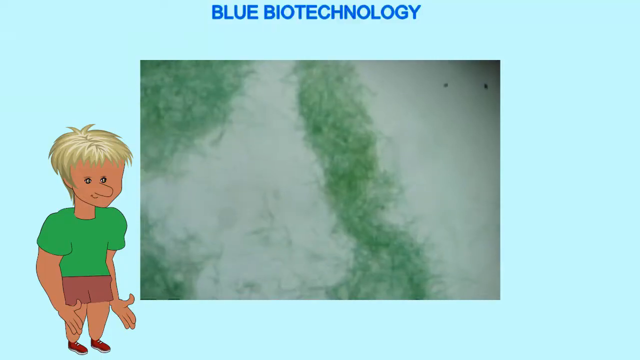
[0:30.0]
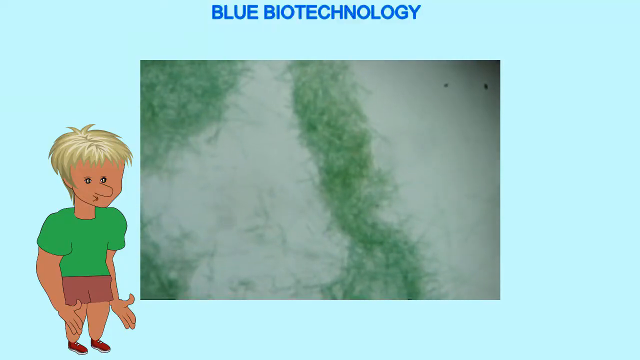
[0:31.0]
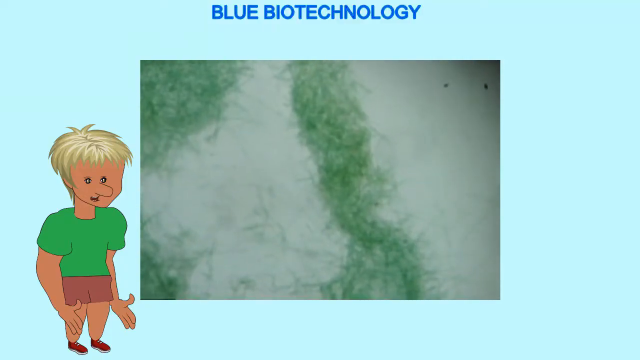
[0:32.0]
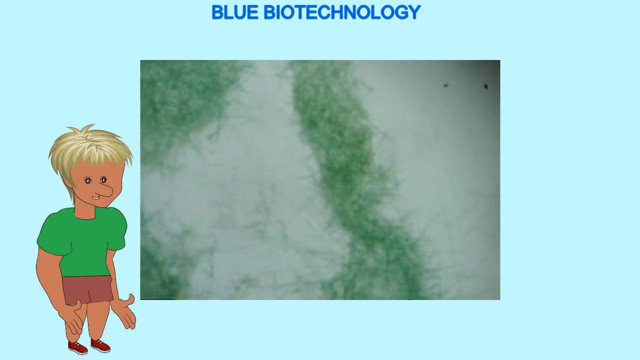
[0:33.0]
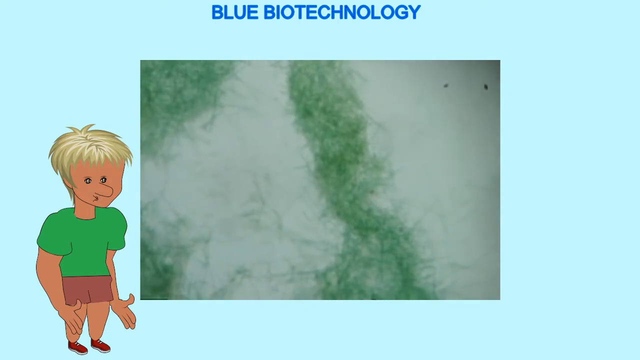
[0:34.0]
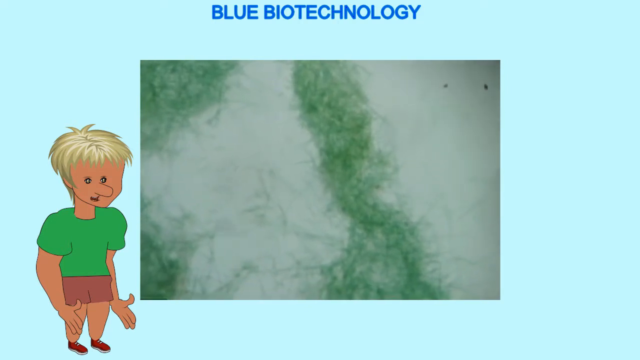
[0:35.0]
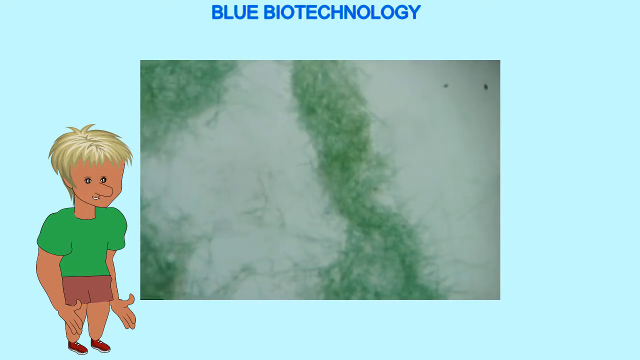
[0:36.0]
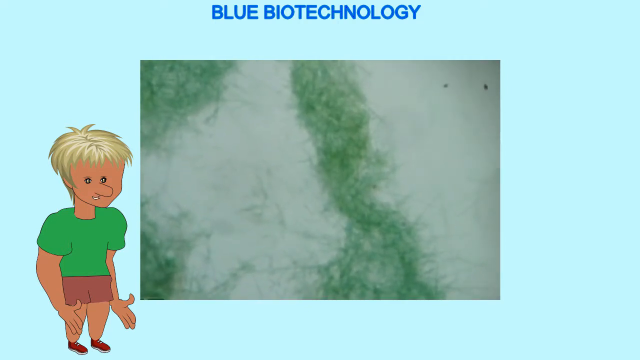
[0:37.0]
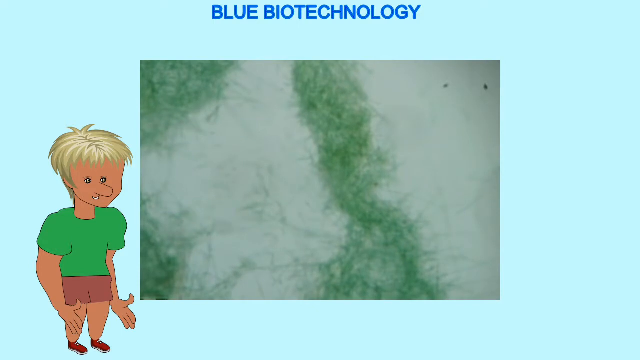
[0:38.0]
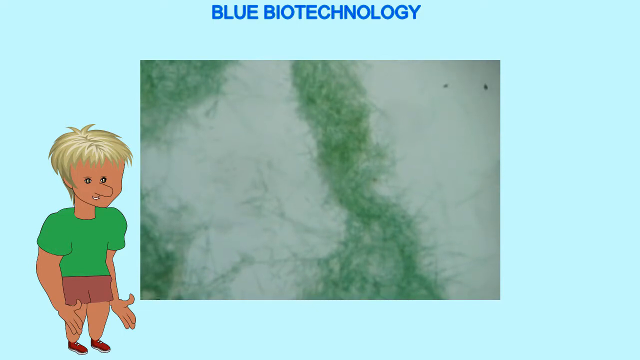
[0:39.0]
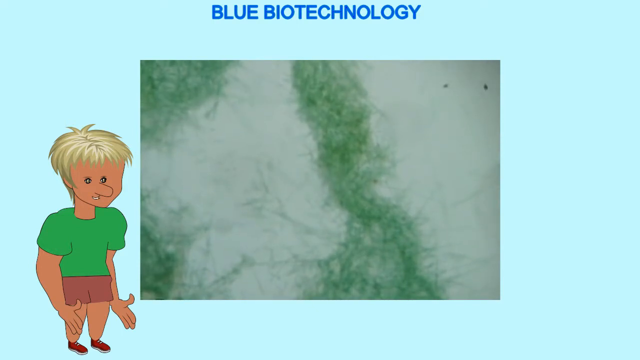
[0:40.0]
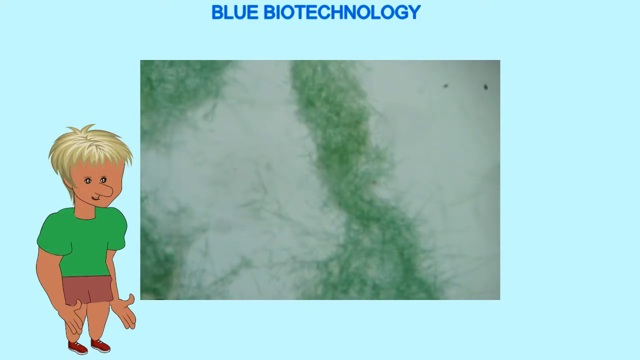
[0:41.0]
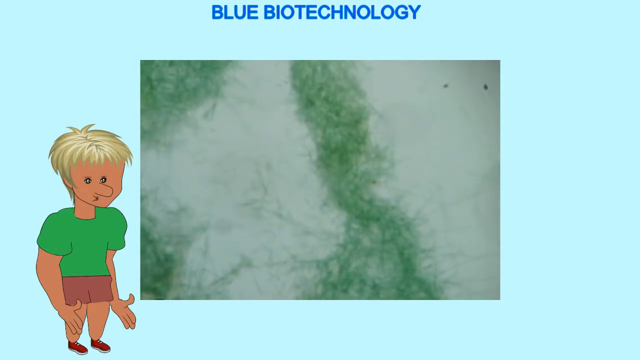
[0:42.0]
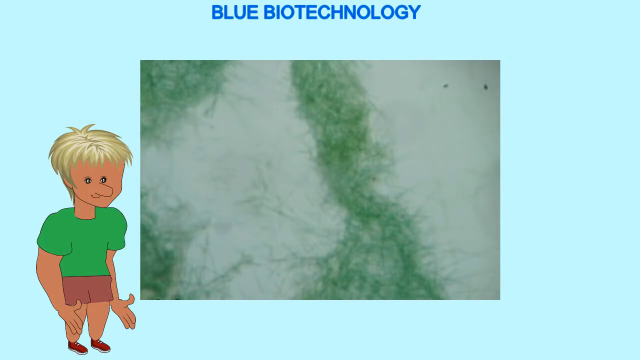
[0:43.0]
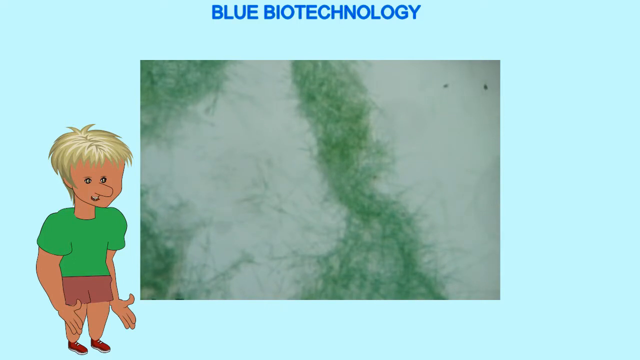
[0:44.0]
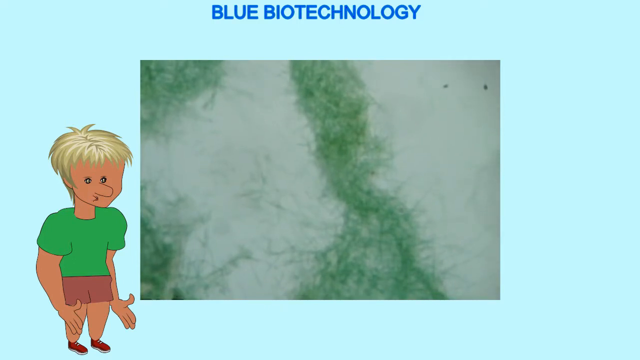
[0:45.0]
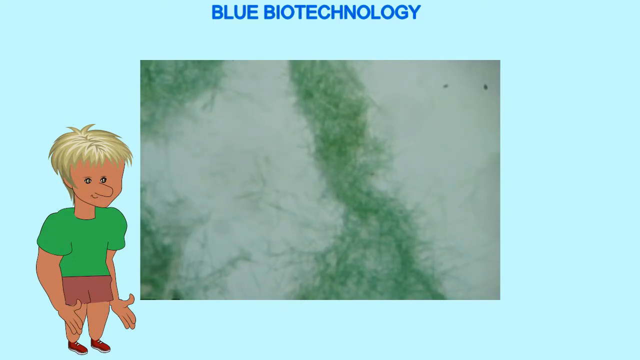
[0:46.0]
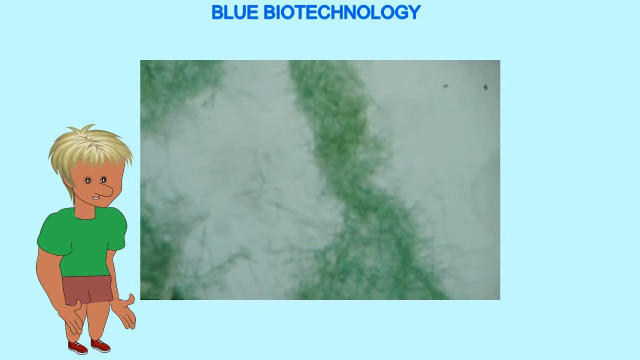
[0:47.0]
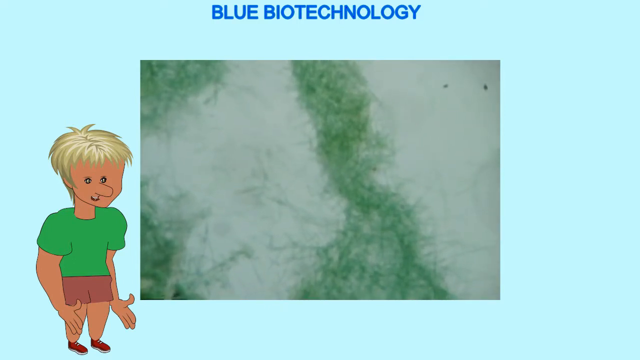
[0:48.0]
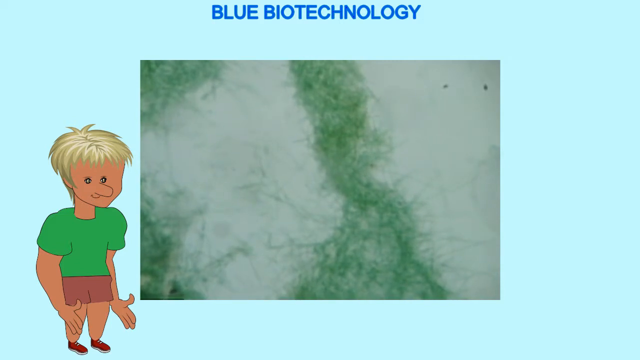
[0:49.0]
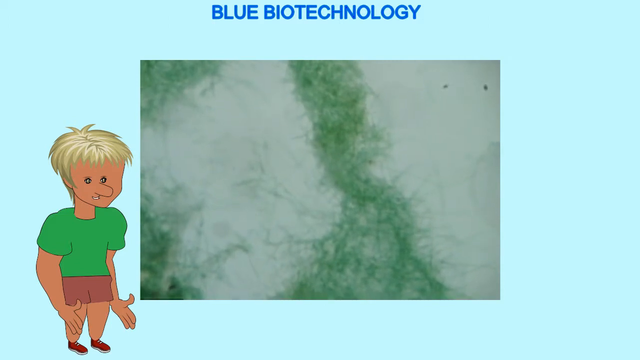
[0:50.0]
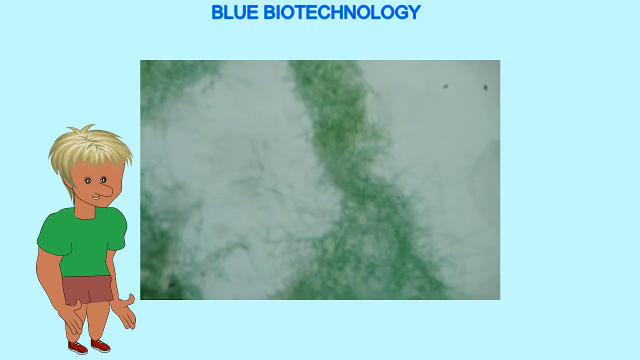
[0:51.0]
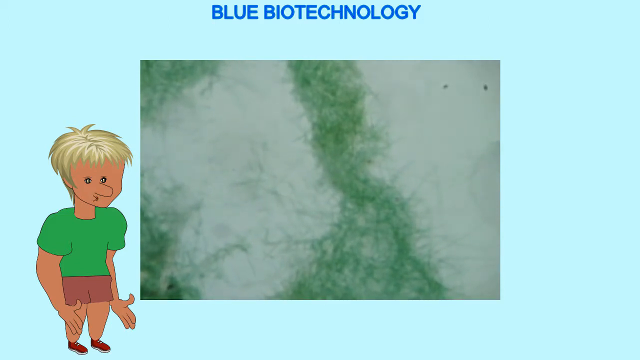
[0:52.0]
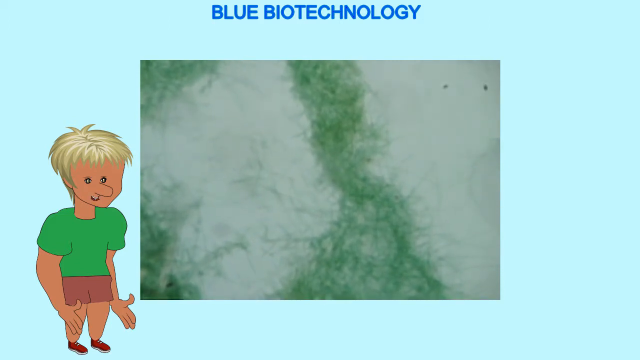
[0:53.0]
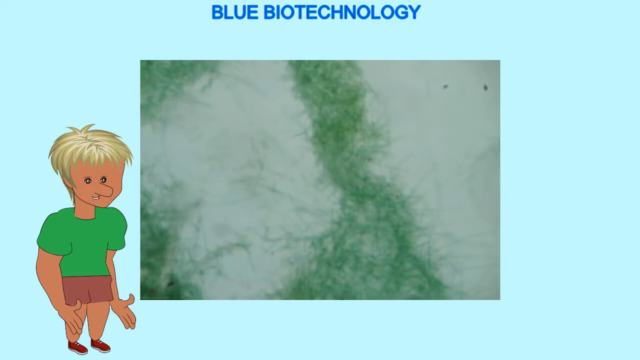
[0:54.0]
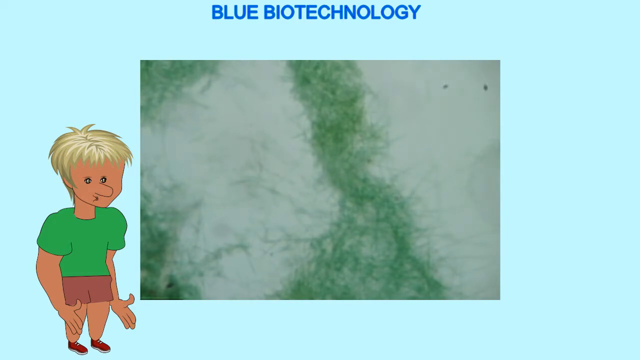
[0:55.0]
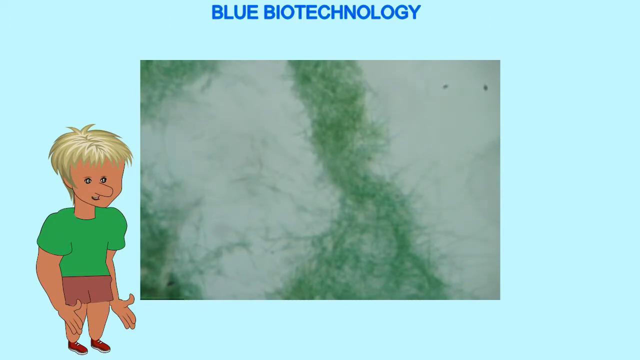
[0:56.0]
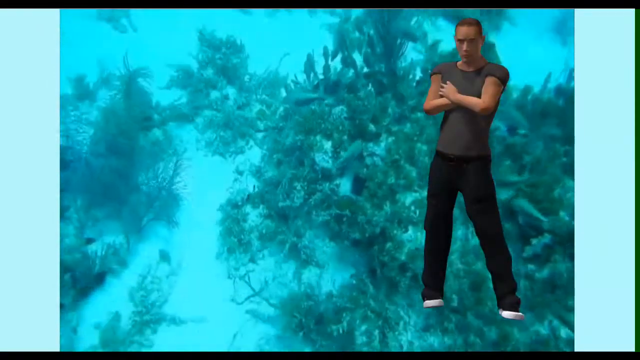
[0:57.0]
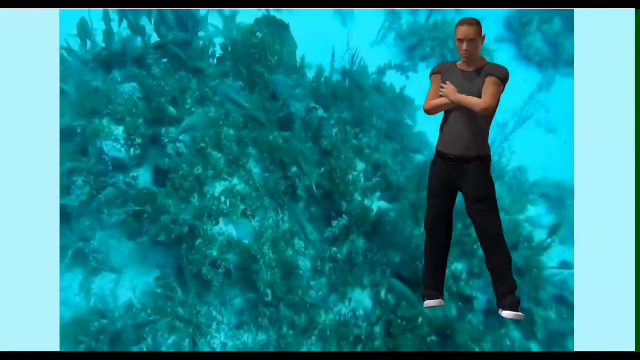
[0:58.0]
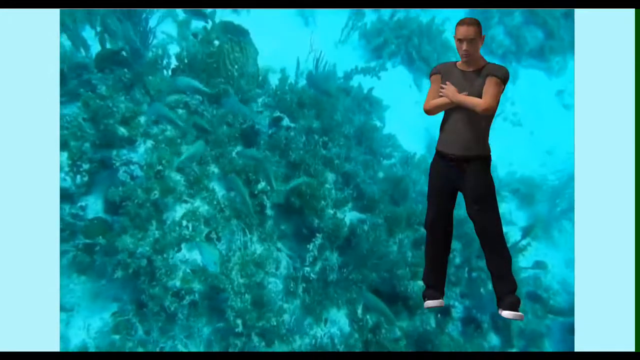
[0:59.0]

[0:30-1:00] A light blue box fills the frame with a smaller box in the middle of it that contains the video. Above it, in the top center of the screen, "Blue Biotechnology" appears in medium blue capital letters. The video inside the center box shows the bottom of some sort of water, a creek or river: white sand with some green plants along the left-hand side and in a strip up the middle, running a little diagonally from right to left as it goes up. To the left of the box is a cartoon figure of a male with short spiky blonde hair, tan skin and a large nose. He wears a green short-sleeved shirt and brown pants, and his lips move as if he is talking. The video then changes to a quick image of more plants underwater, with a cartoon male figure standing with arms crossed on the right side of the screen.